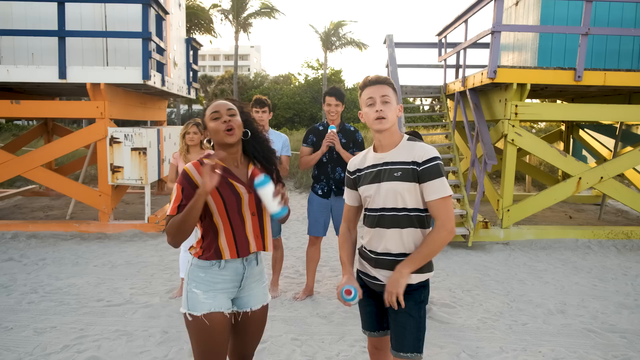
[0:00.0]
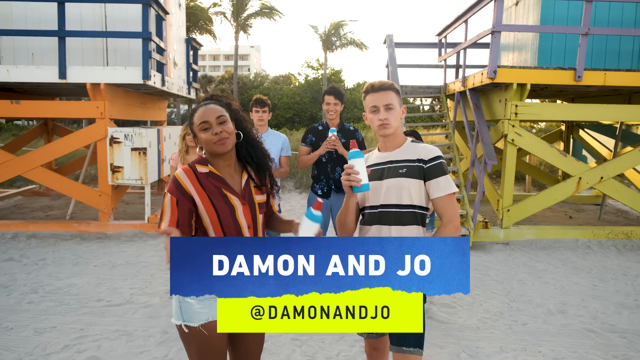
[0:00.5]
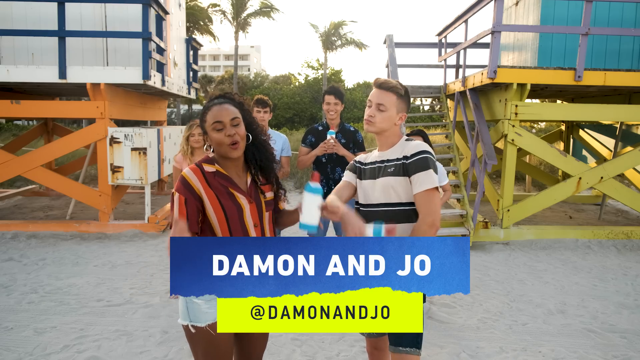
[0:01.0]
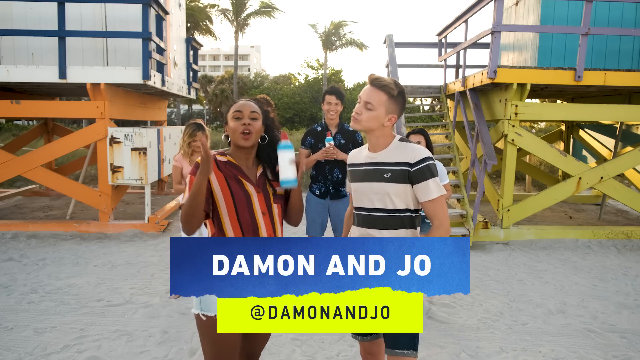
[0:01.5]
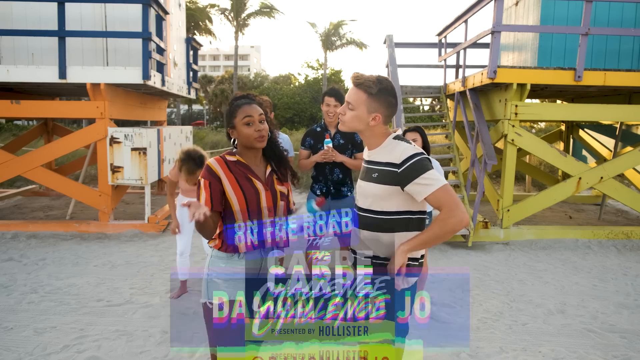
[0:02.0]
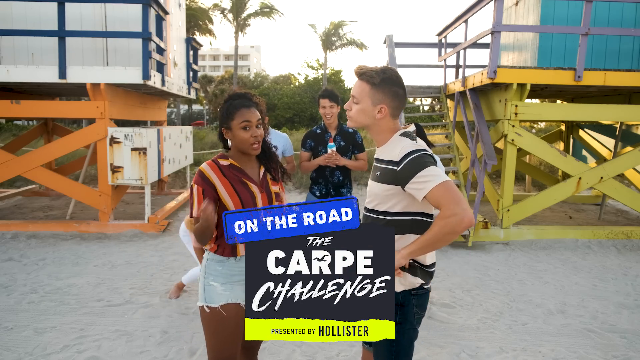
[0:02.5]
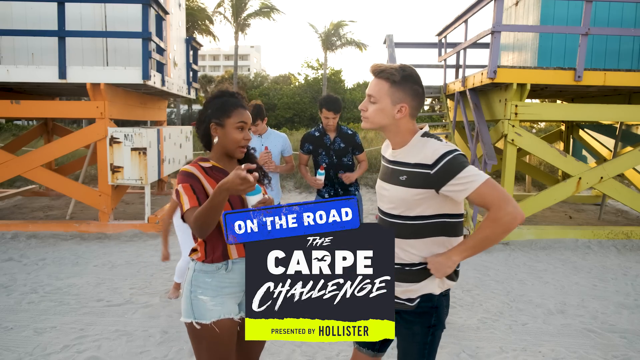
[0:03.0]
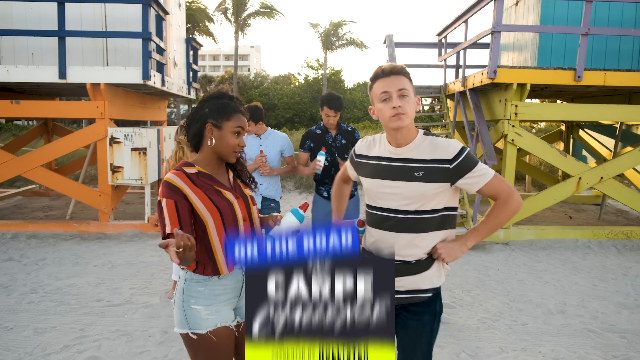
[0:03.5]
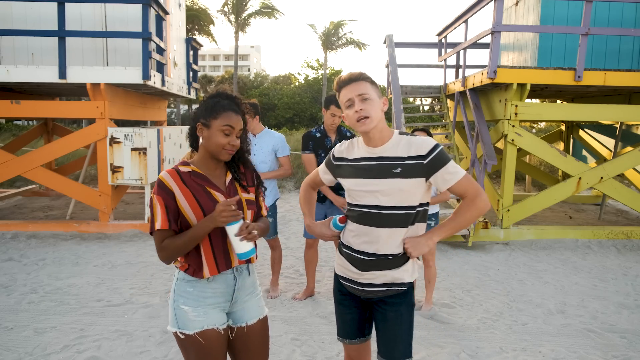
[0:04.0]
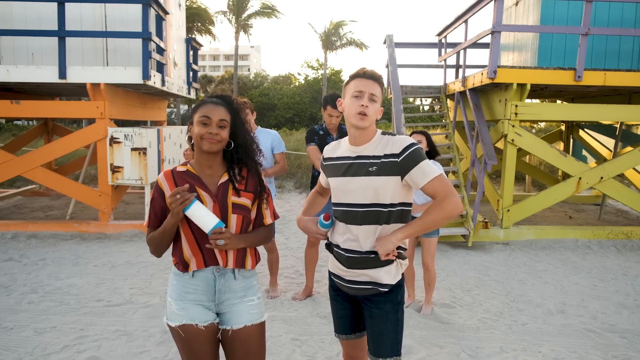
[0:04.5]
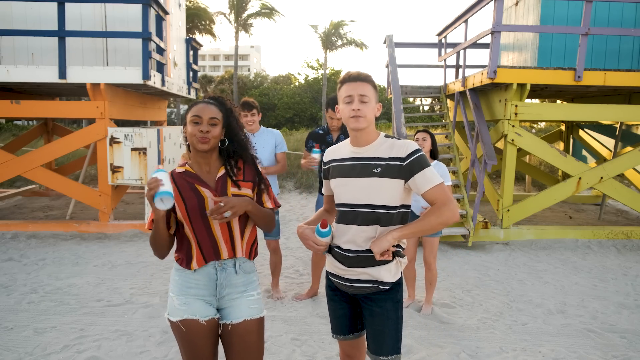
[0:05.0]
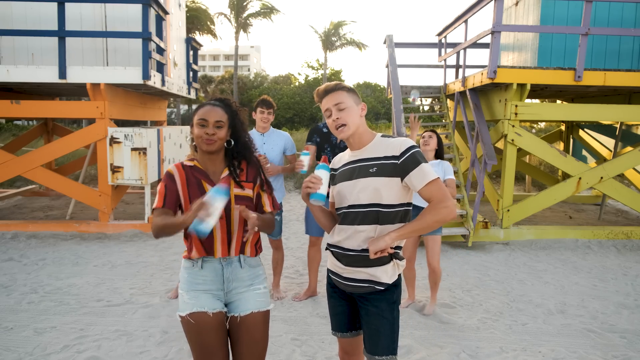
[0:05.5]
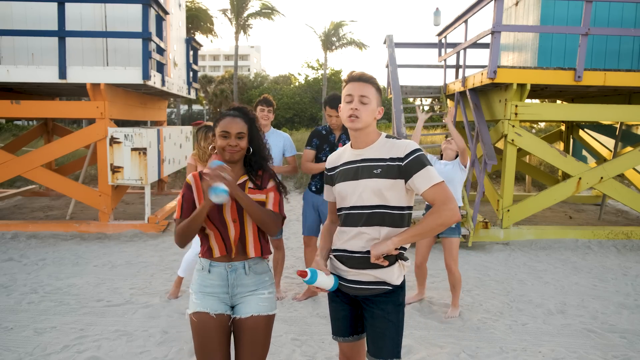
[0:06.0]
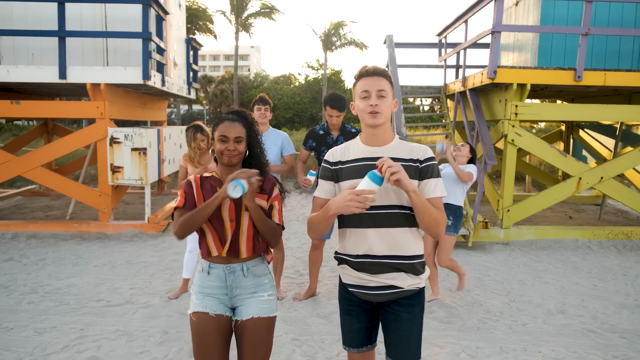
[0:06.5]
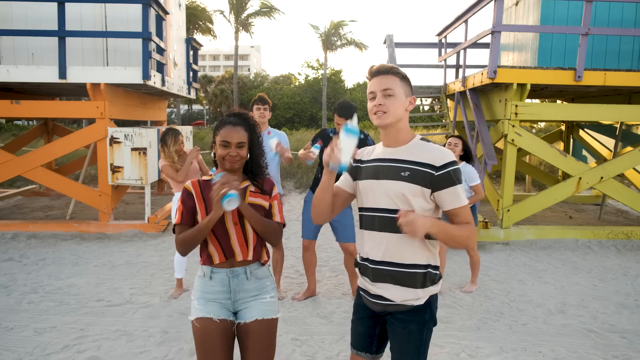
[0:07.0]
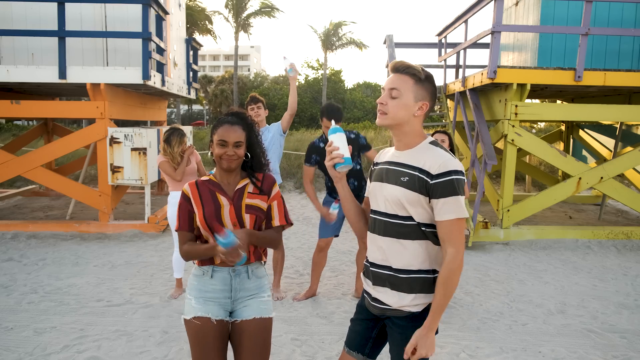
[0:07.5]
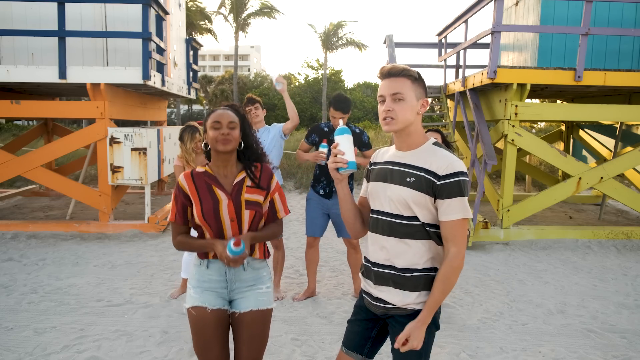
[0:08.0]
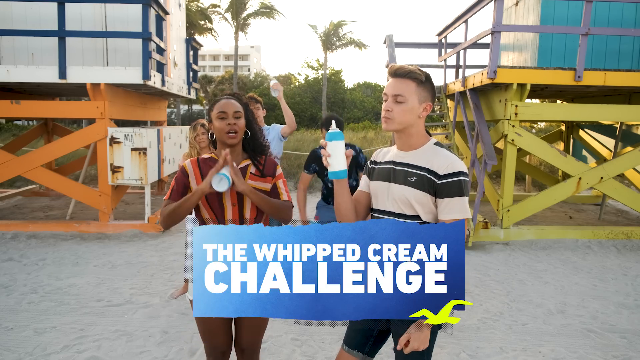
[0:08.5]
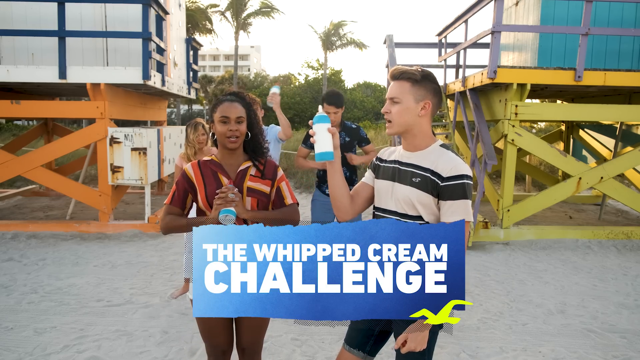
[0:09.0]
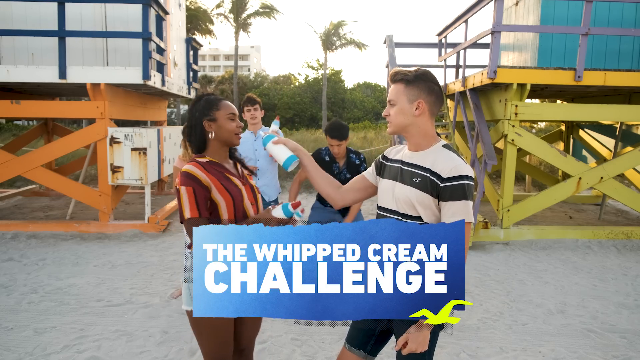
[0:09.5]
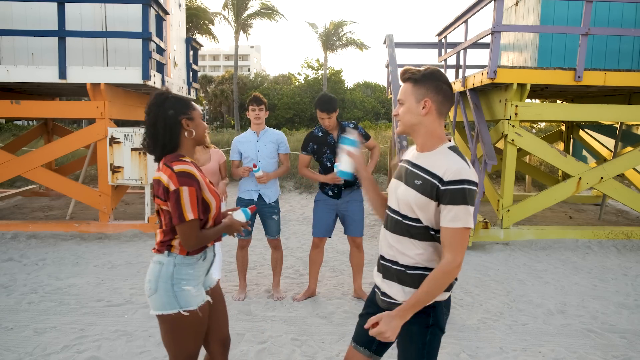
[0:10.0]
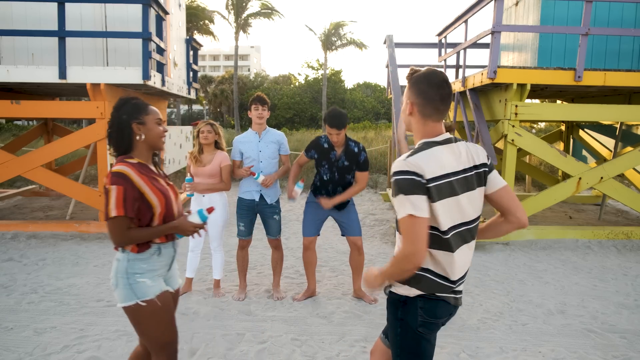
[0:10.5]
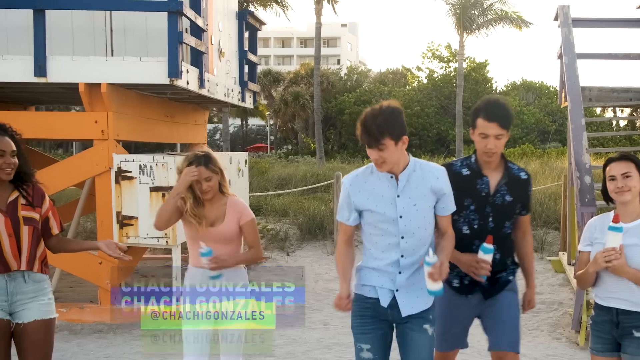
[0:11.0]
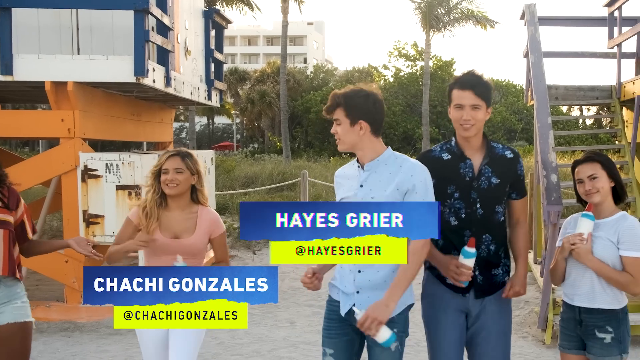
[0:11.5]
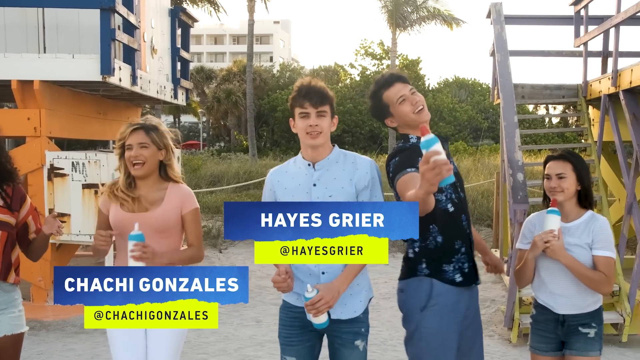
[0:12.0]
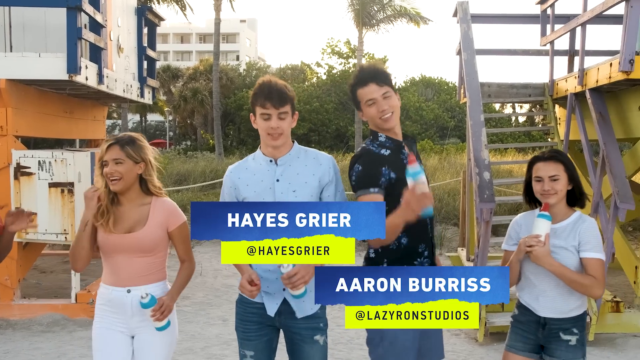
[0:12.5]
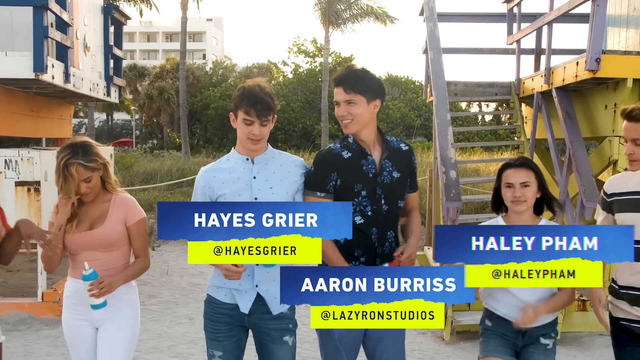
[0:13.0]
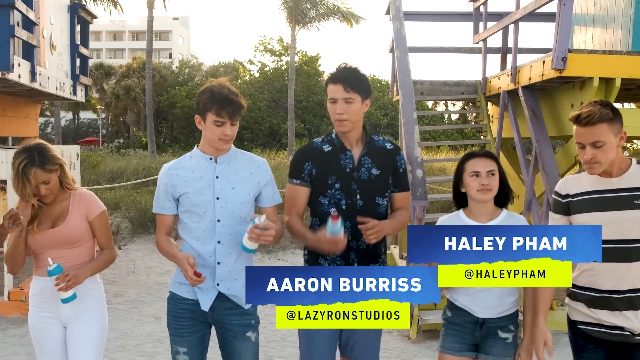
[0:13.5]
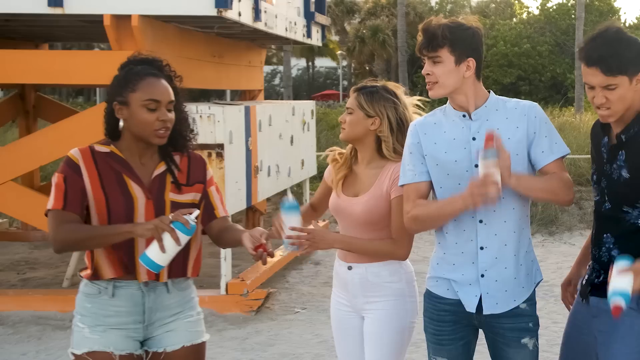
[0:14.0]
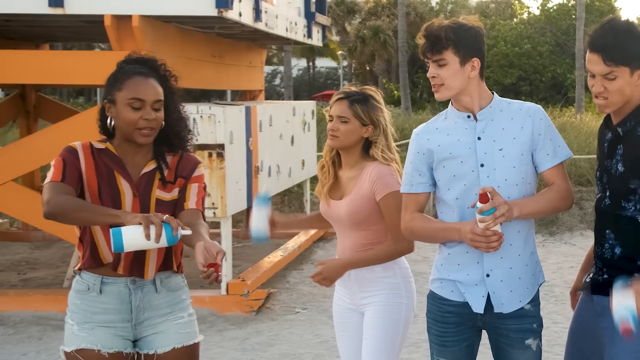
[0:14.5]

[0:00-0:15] The opening of a TV show starring Damon and Jojo. Damon appears to be a young white male teenager wearing a white and black striped shirt and black knee-length jean shorts. Jojo appears to be a young Black female teenager with curly hair down the length of her back; she wears blue jean shorts and a striped shirt with brown, pink and a salmon-like color in it. The name of the show is On the road the carpe challenge, and this is the whipped cream challenge: the two hold canisters of whipped cream in their hands. Jojo shakes the whipped cream, sort of doing a little dance with it. They then talk to four young teenagers, Chachi, Hayes, Aaron and Haley, and Jojo is about to squirt some whipped cream out of the can onto her arm. They are on a beach, standing on sand and positioned between two brightly colored, lifeguard-house-like structures: one is orange with a blue banister and the other is yellow with a light blue banister. In the background there is a hotel-like building and some palm trees.